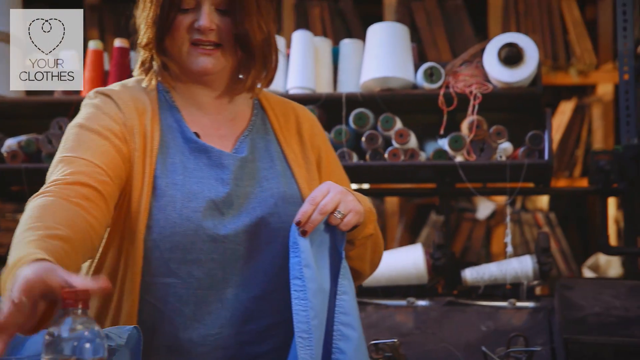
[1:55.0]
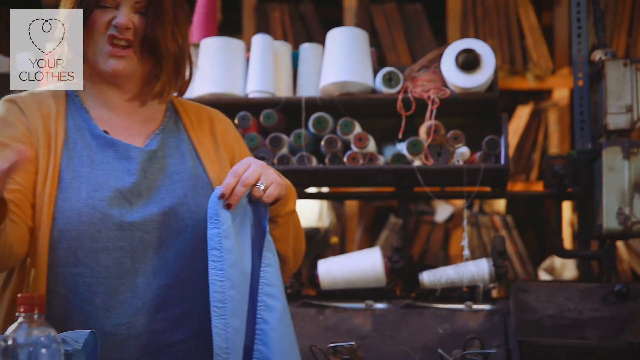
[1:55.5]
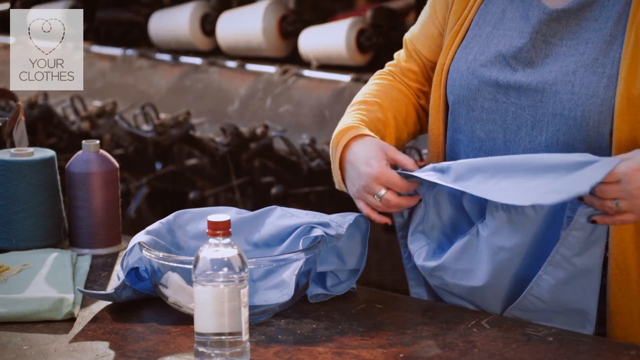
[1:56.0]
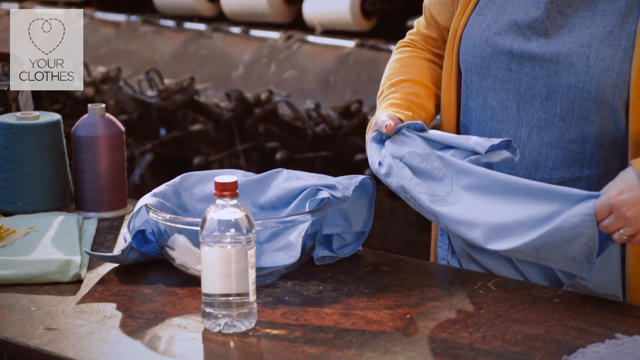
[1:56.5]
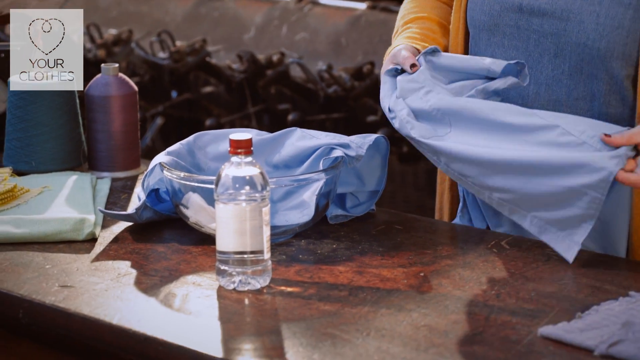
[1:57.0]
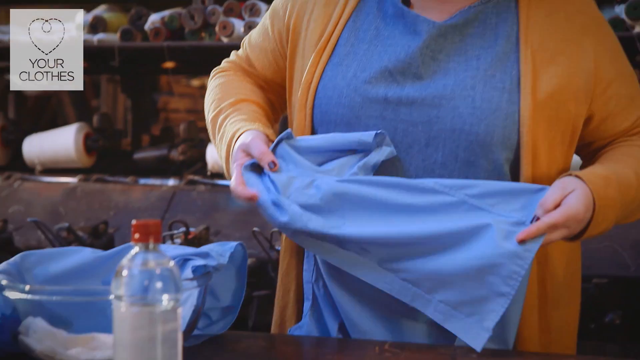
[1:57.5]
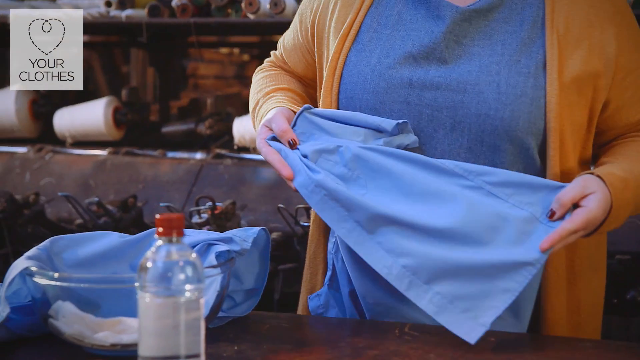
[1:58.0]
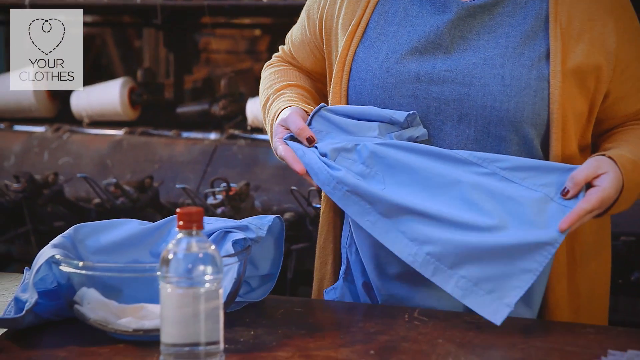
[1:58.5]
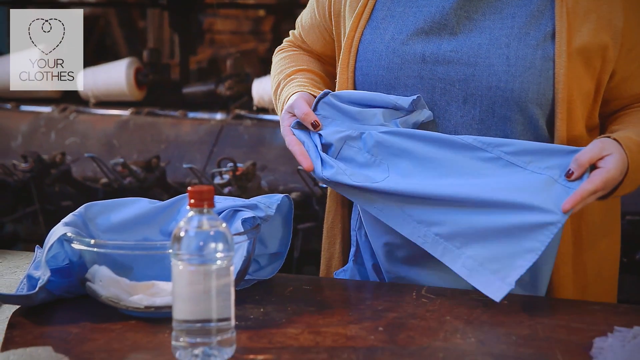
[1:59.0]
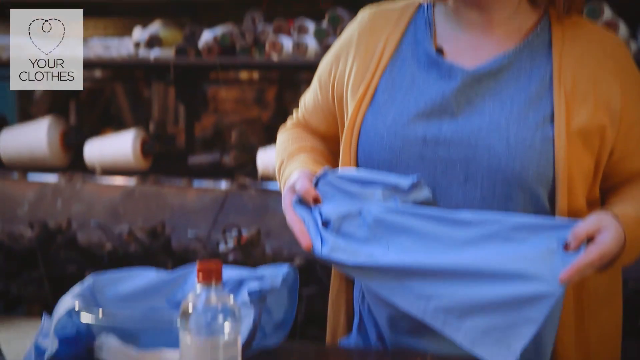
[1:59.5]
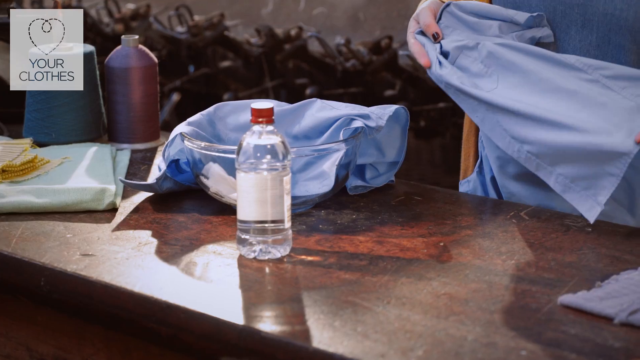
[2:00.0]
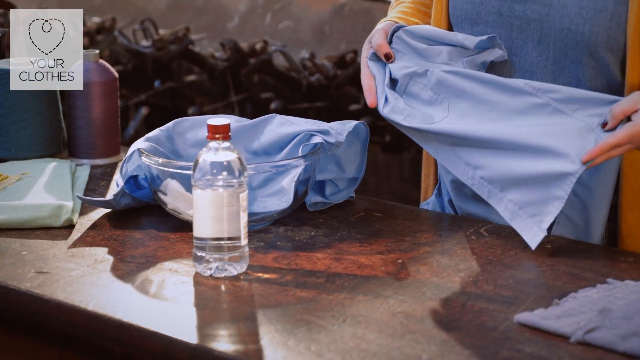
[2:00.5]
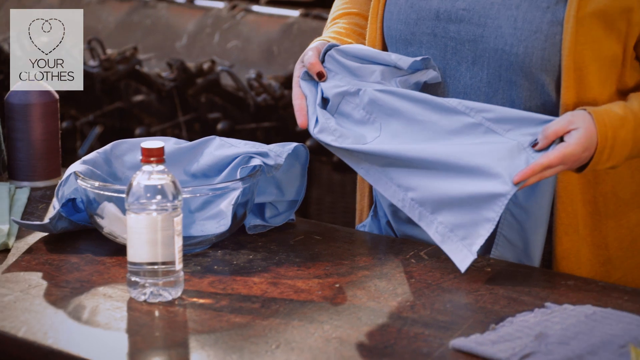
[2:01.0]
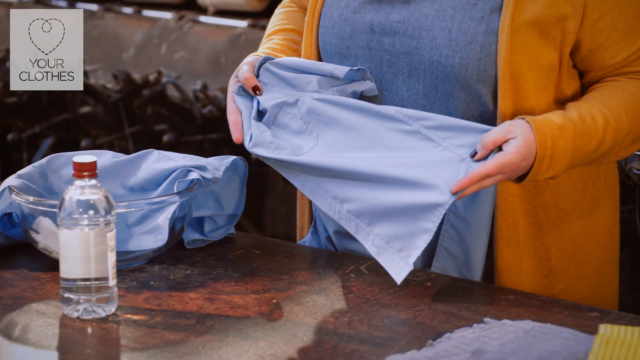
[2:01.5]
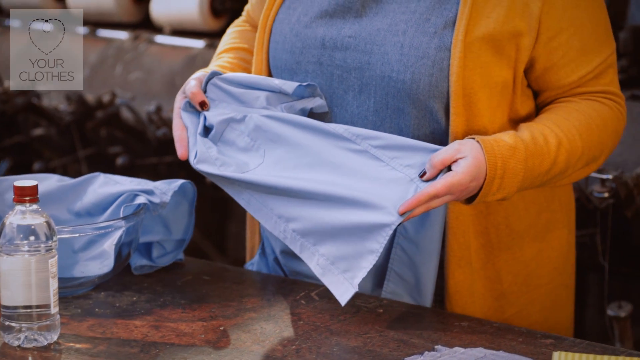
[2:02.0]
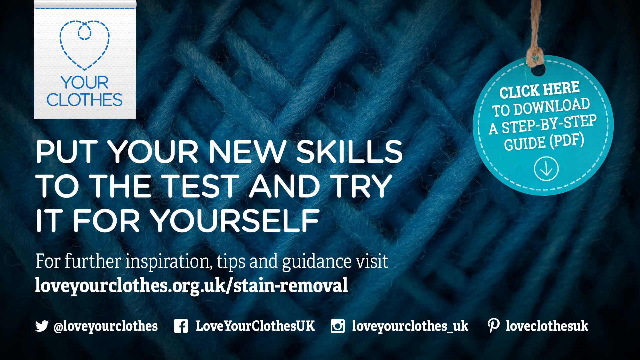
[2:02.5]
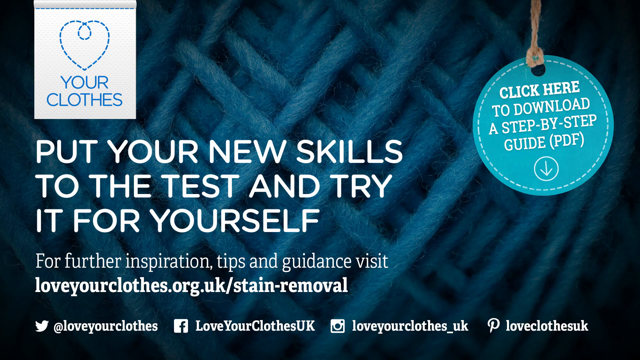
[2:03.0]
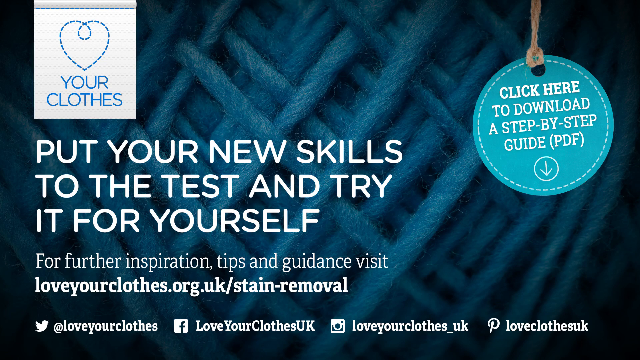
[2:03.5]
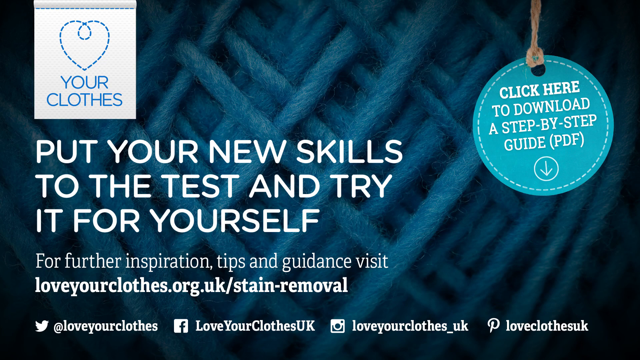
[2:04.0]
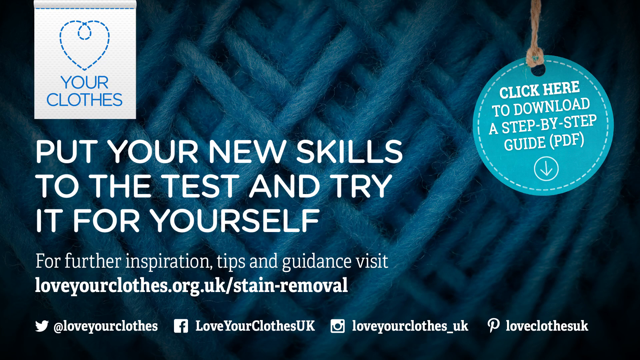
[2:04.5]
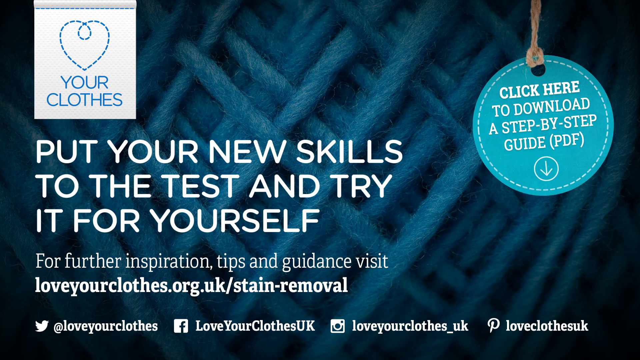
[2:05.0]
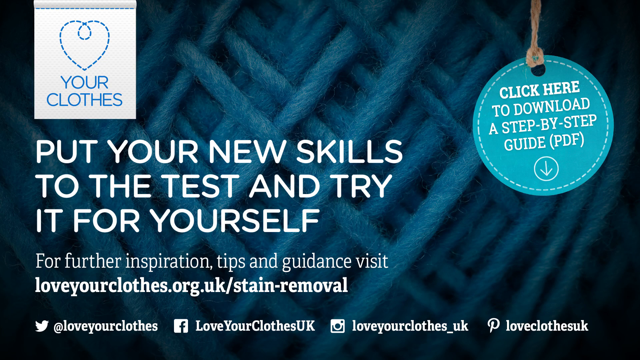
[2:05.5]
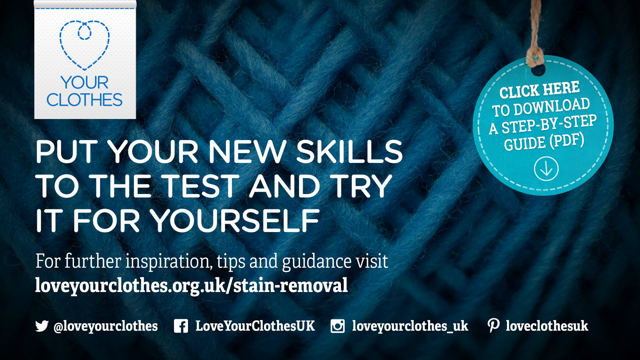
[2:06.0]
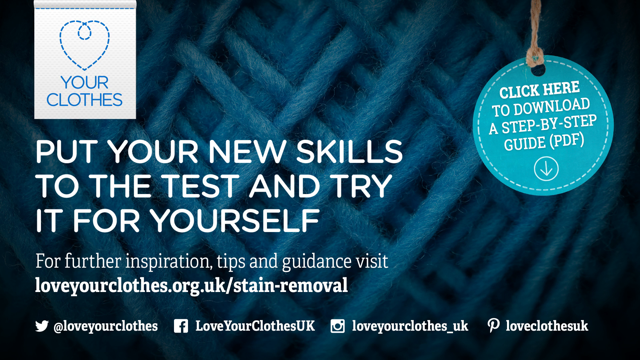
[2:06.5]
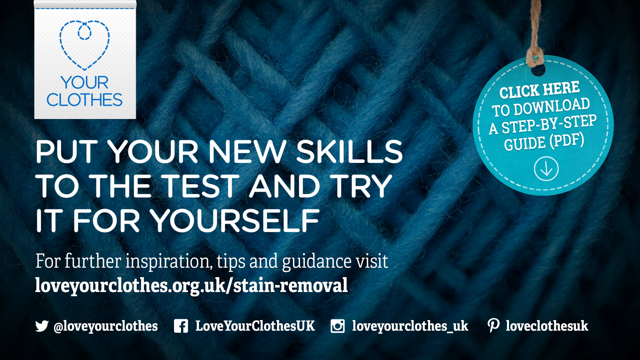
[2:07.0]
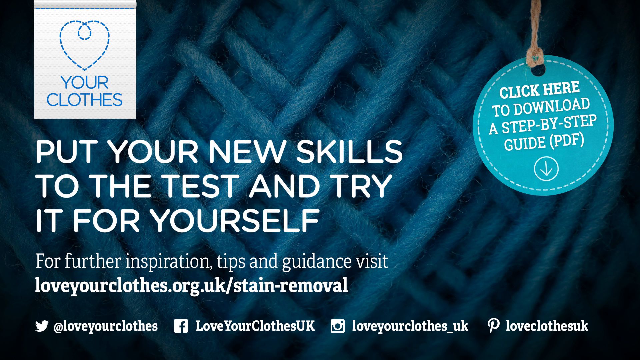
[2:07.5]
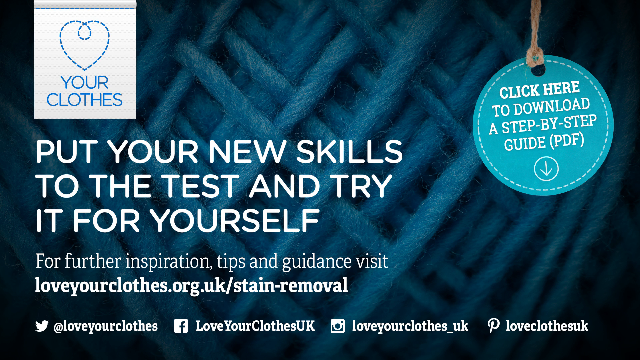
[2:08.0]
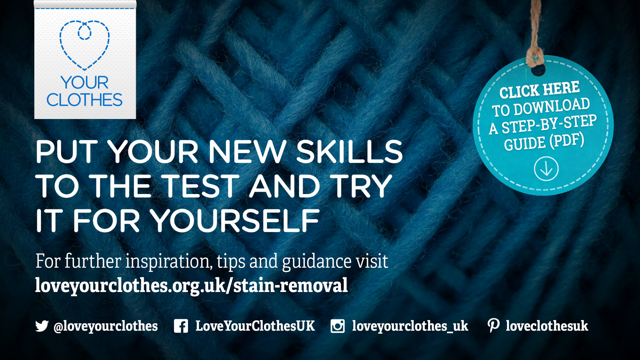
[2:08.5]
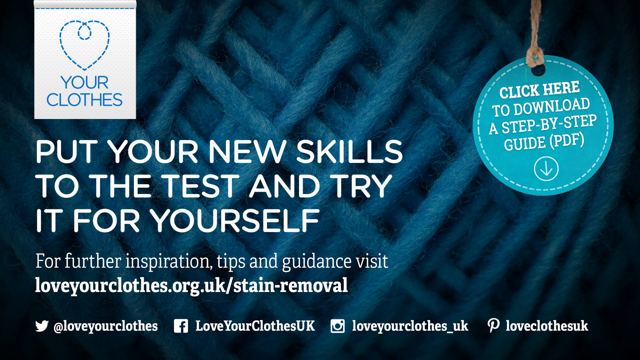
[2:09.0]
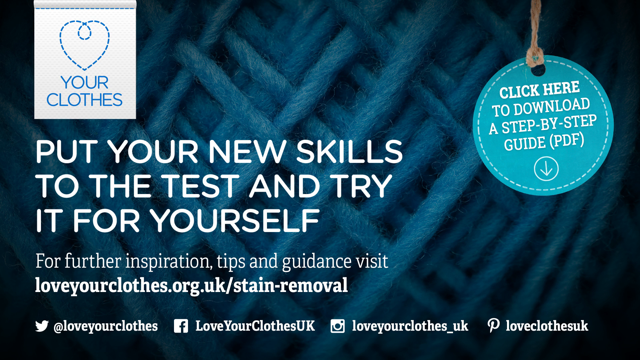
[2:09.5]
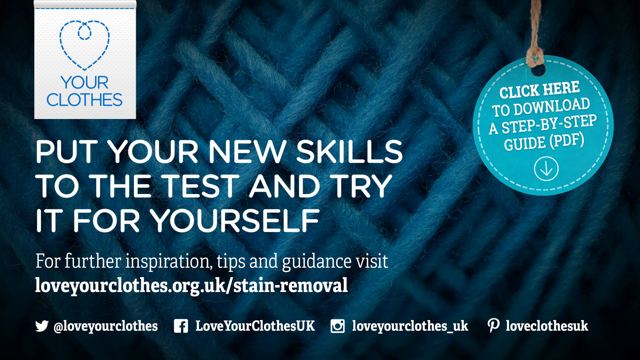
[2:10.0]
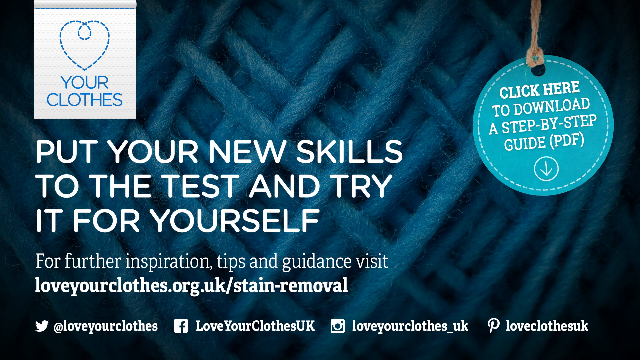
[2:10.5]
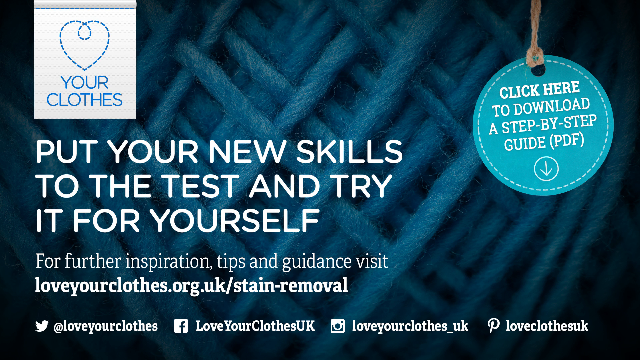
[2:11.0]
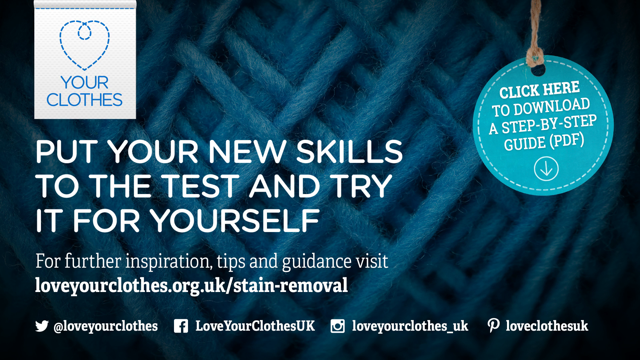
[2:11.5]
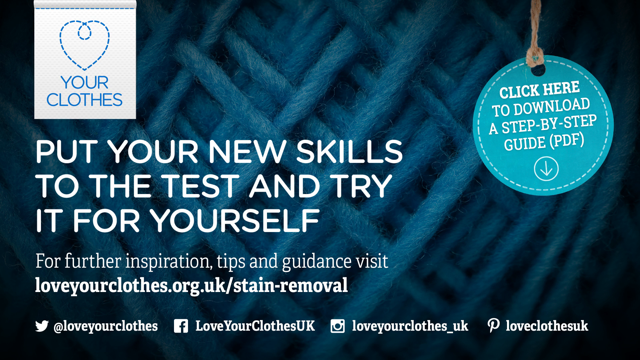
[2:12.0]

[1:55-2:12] This appears to be the end of a stain removal video. A woman with short brown hair, wearing a yellow sweater with a blue top underneath, holds up a clean blue shirt, showing what it should look like when finished, while another shirt lies saturated in the bowl next to her. In the upper left-hand corner is a logo styled like a white clothing tag reading "Your Clothes". The video then switches to a page with more direction. On the right-hand side is a circular clothing tag reading "Click here to download a step-by-step guide". Bold white text reads "Put your new skills to the test and try it yourself" and then "For further inspiration, tips, and guidance, visit", followed by a website and links to a Twitter page, a Facebook page, an Instagram and a Pinterest page.